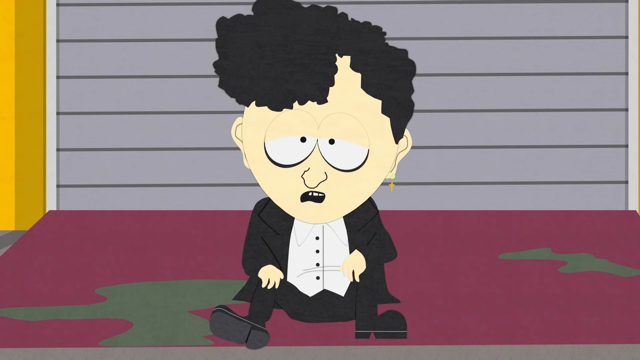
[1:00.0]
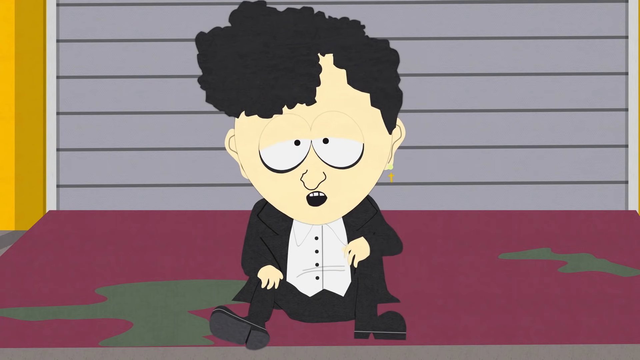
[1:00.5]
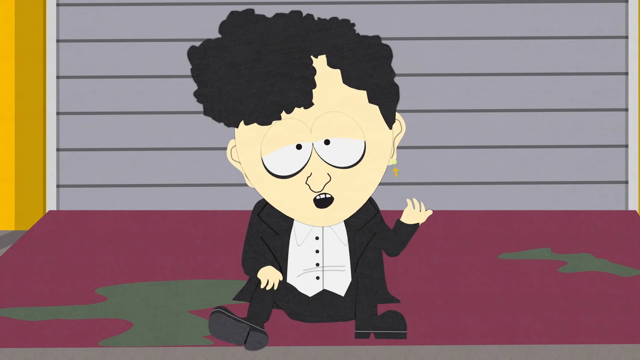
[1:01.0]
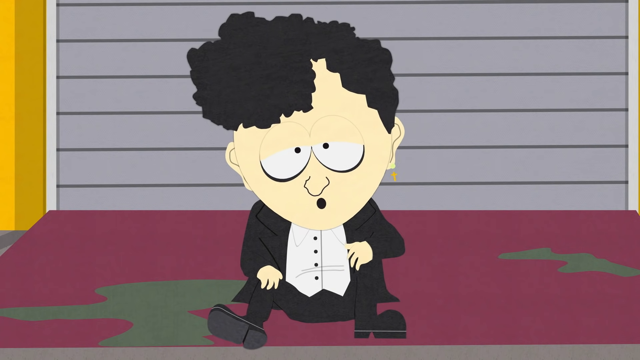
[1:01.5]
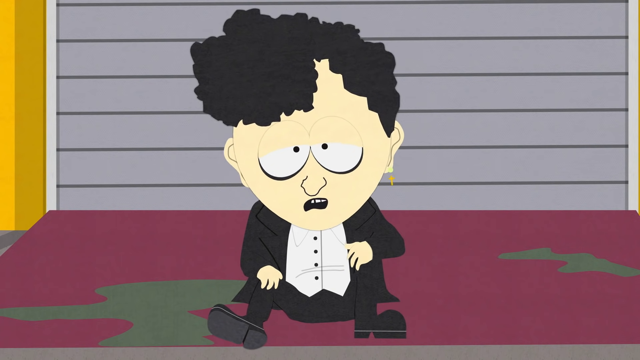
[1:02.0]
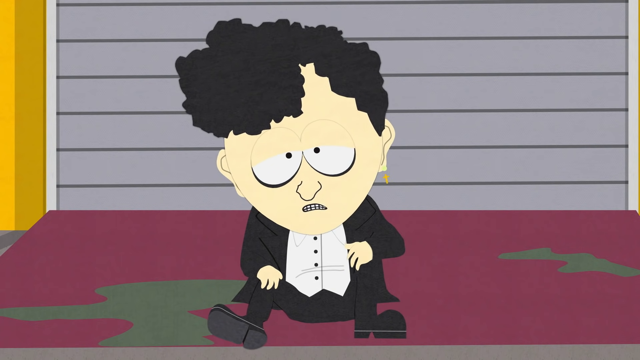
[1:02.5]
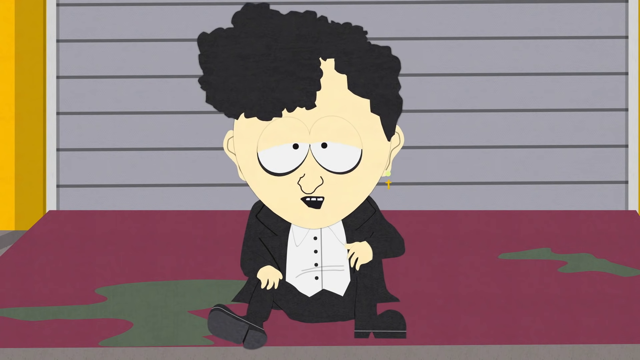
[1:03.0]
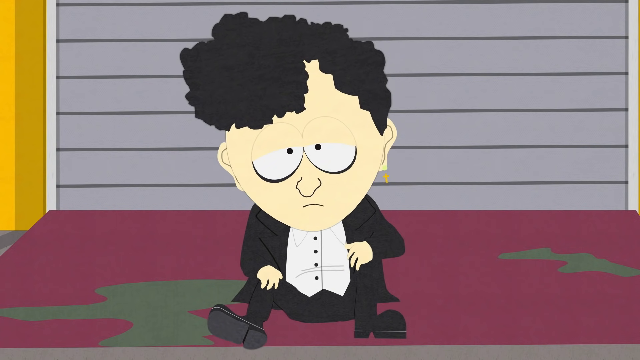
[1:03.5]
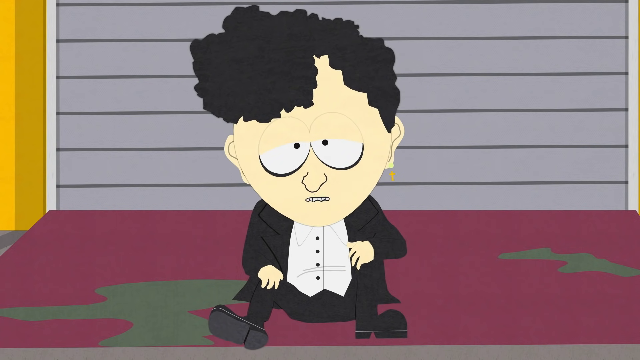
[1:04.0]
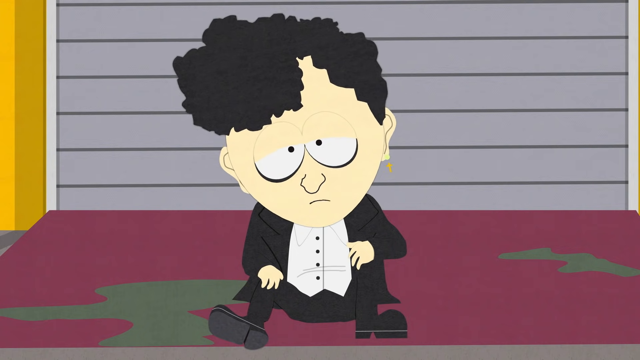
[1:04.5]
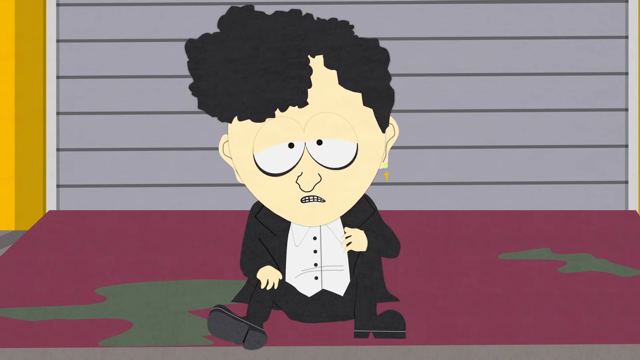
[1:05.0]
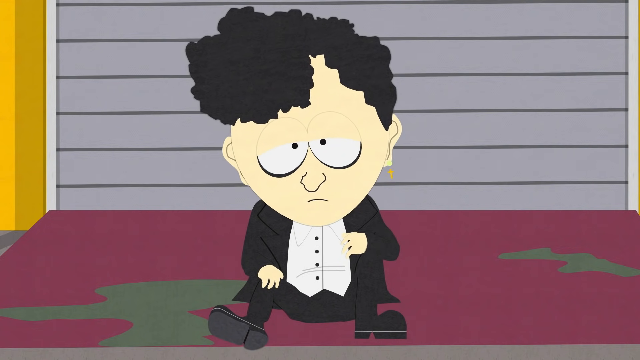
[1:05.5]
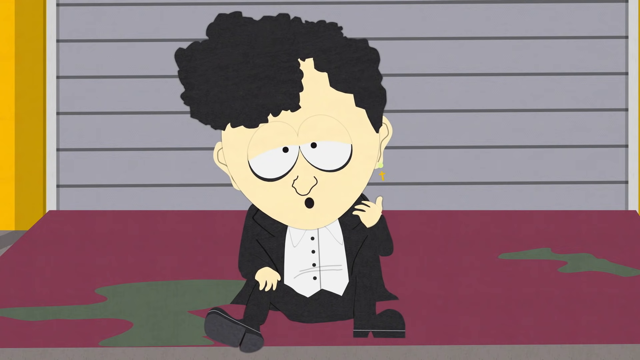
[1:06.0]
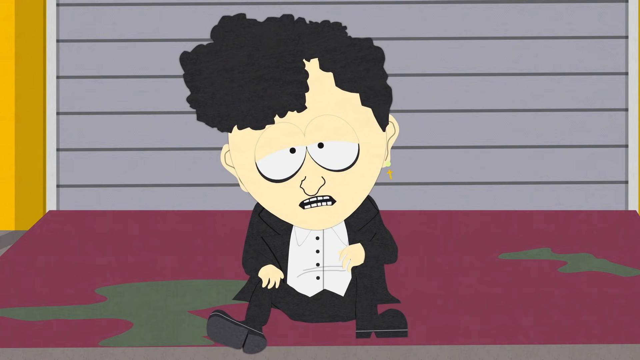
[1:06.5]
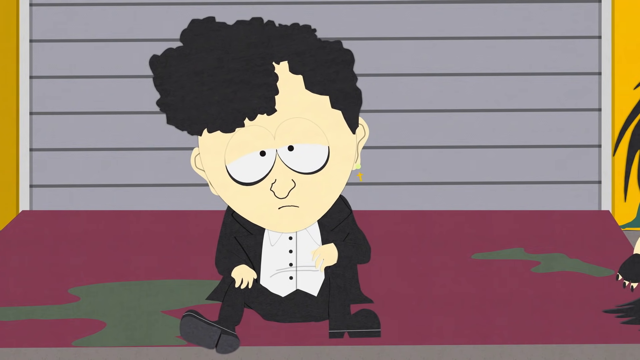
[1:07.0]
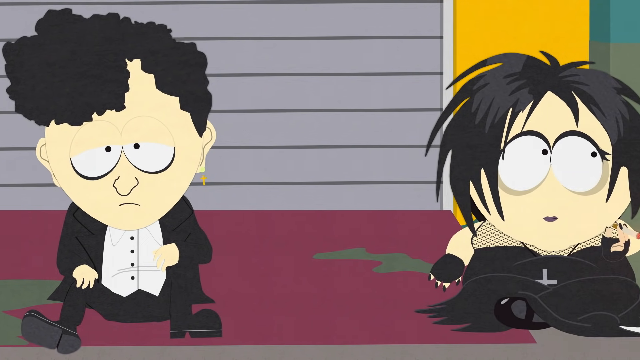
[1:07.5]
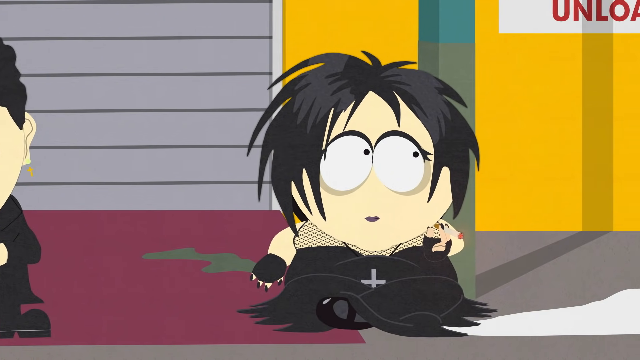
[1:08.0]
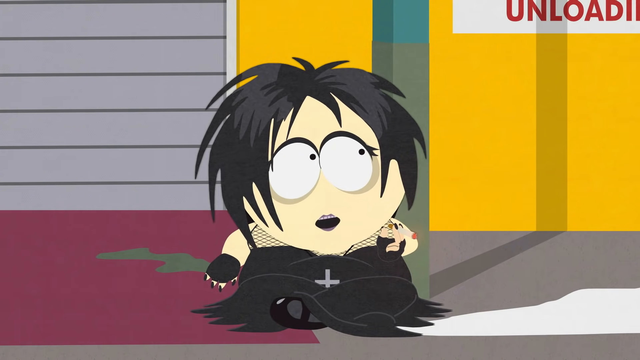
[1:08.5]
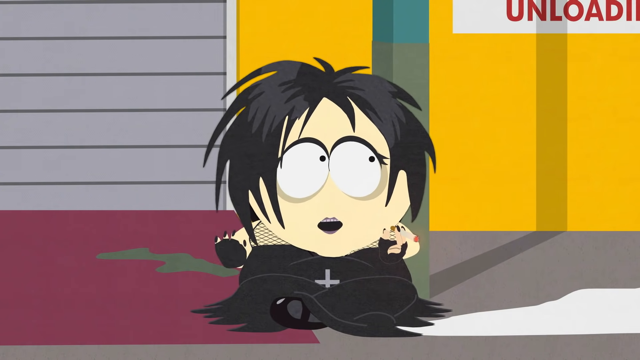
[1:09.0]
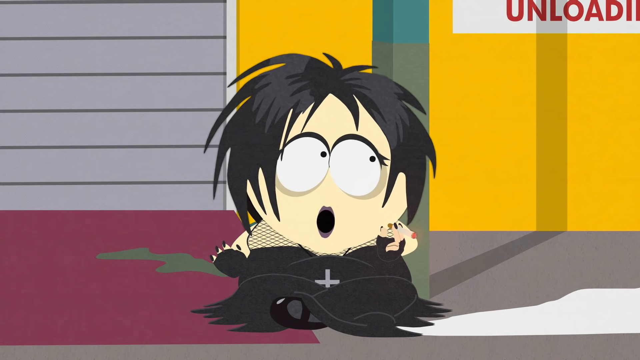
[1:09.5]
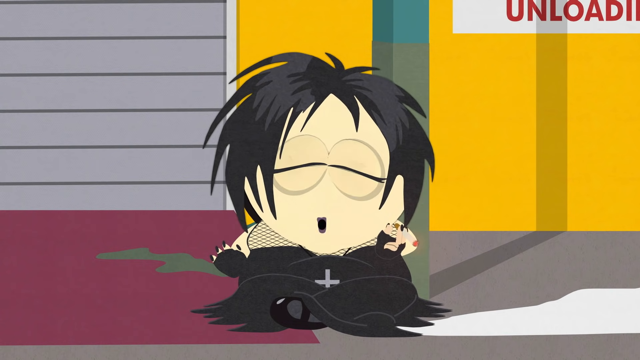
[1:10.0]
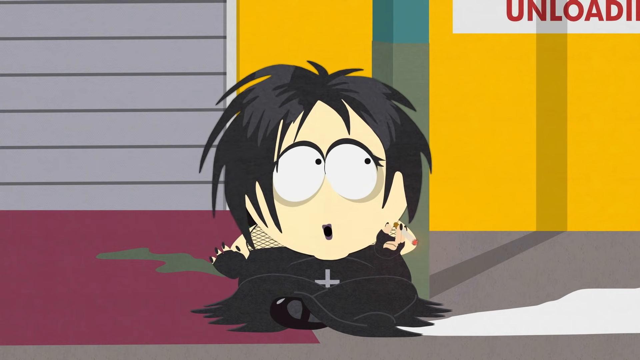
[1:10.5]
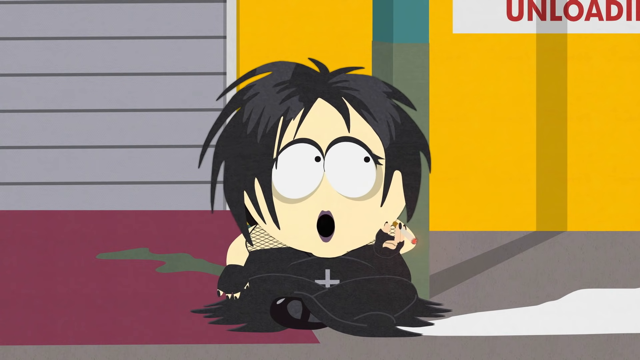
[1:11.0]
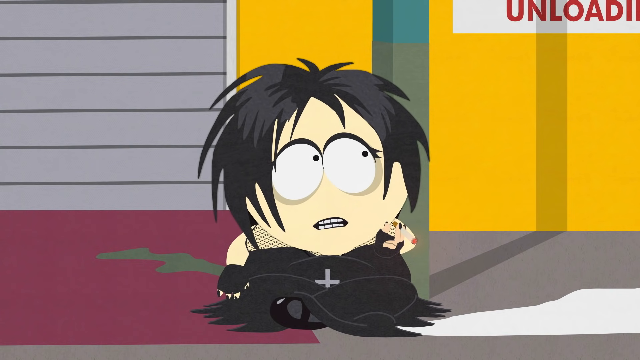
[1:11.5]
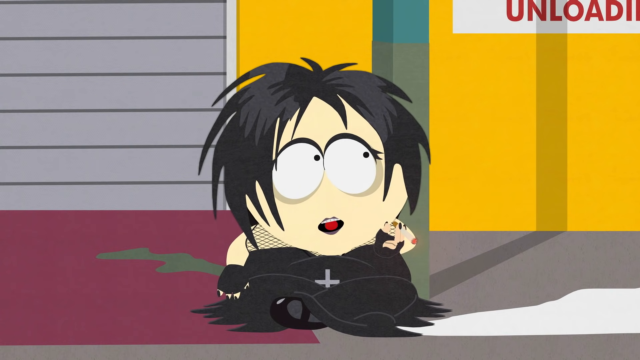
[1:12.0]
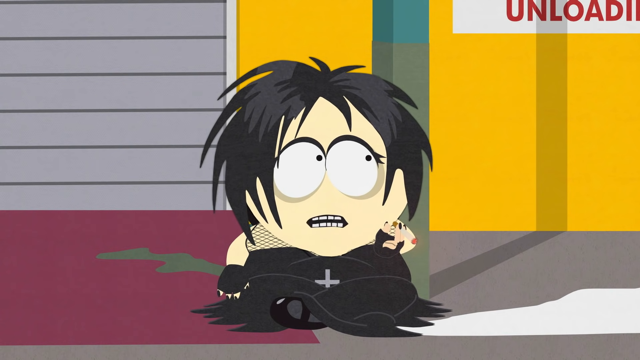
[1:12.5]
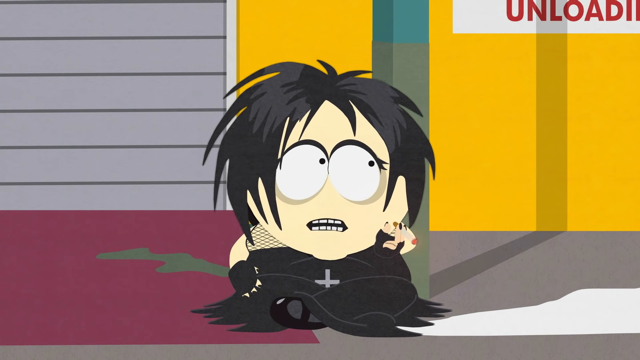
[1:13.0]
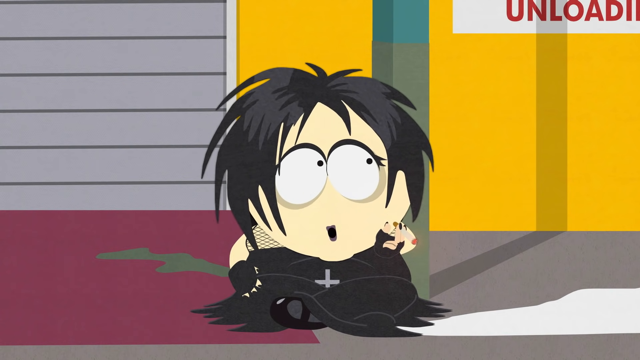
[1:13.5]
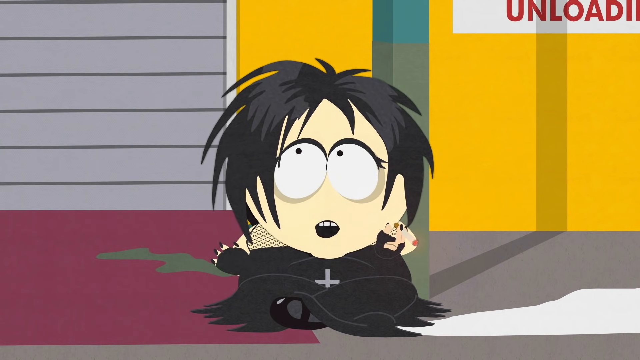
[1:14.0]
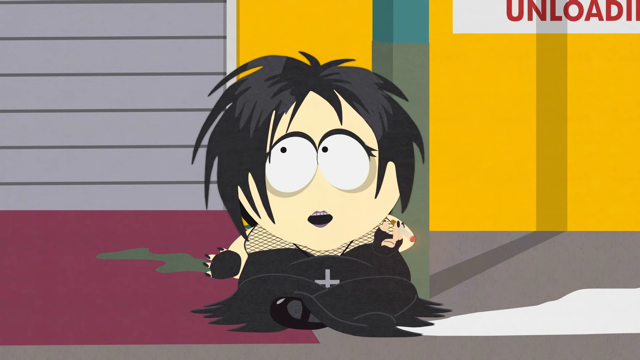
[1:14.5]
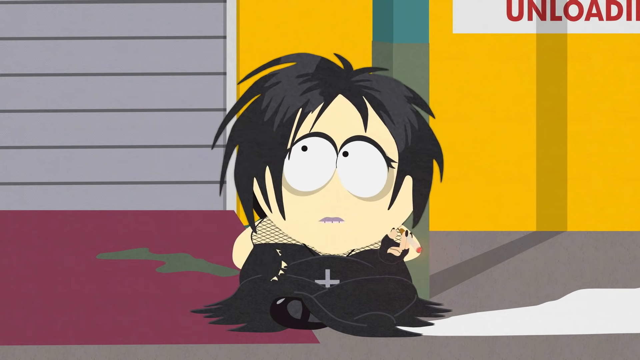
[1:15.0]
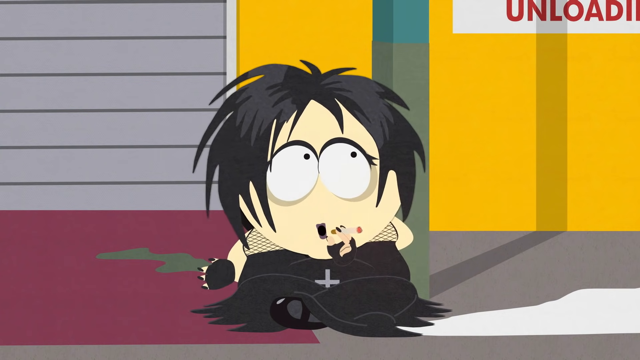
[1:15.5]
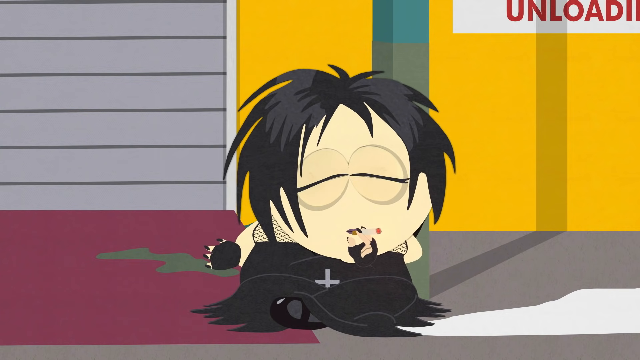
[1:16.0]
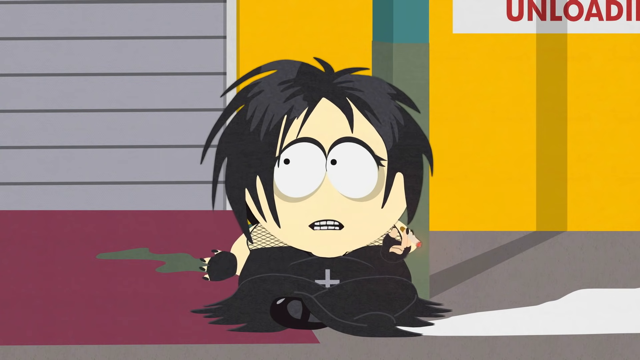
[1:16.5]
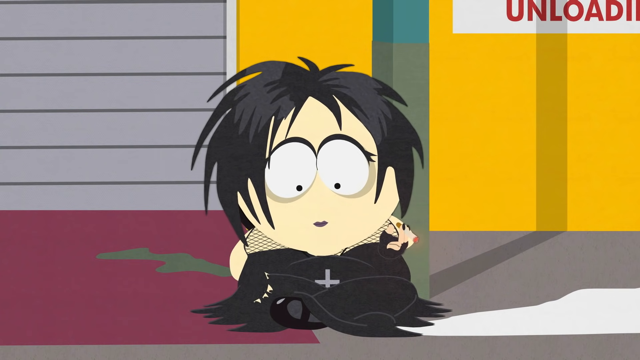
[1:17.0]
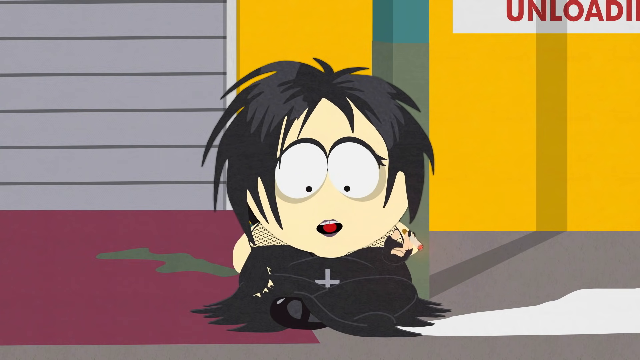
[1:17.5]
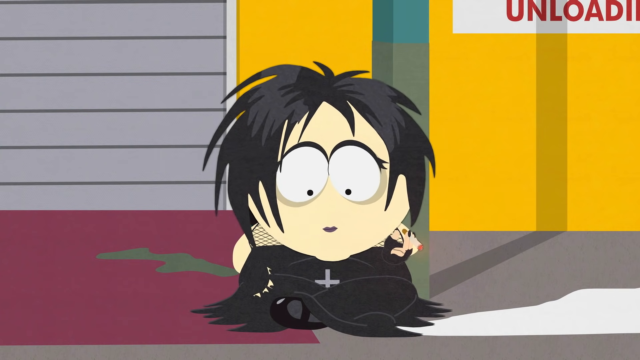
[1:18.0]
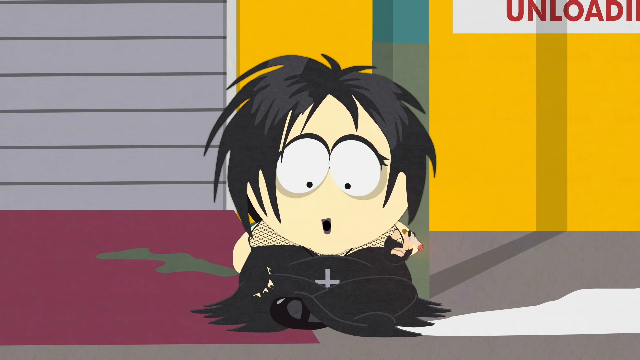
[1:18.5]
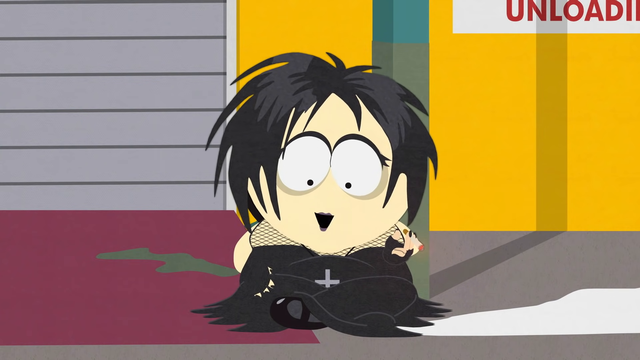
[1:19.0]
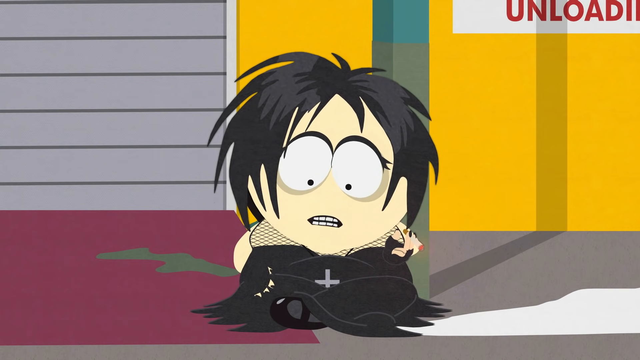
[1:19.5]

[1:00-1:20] The goth kid is sitting on the driveway, where there appear to be puddles of something. The scene cuts to a chubby goth girl dressed in some sort of fishnet top and a black dress with an upside-down cross. She has wild black hair, black mascara around her eyes, fingerless gloves, and black nails, and she is smoking a cigarette. She is talking with the leader of the goth kids, and they are all kind of sitting around talking. The house is bright yellow and the driveway is a dark purple color. There is not much else in the background, but there is a small sign that says "unloading."